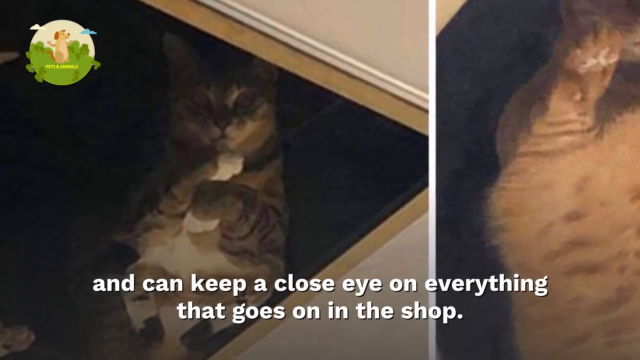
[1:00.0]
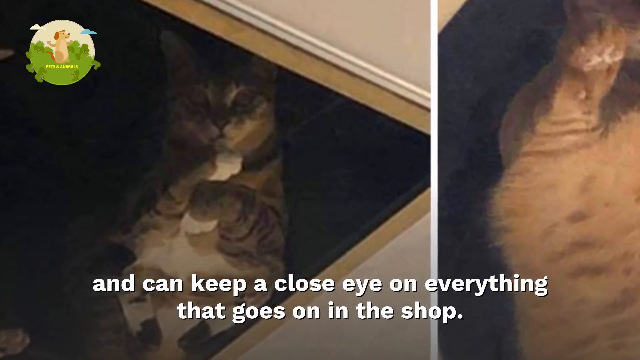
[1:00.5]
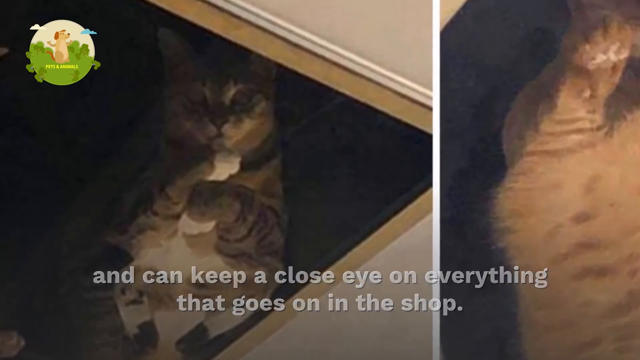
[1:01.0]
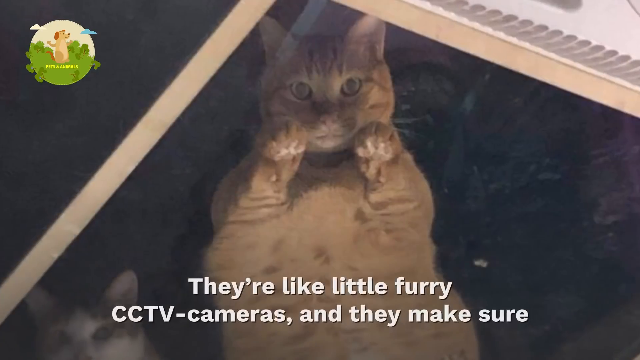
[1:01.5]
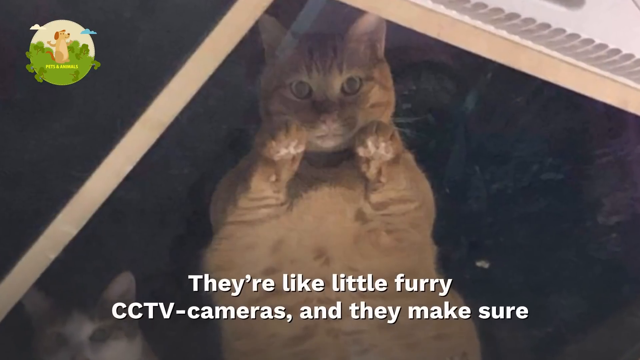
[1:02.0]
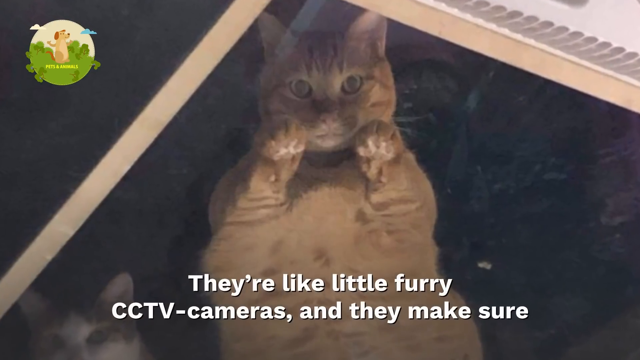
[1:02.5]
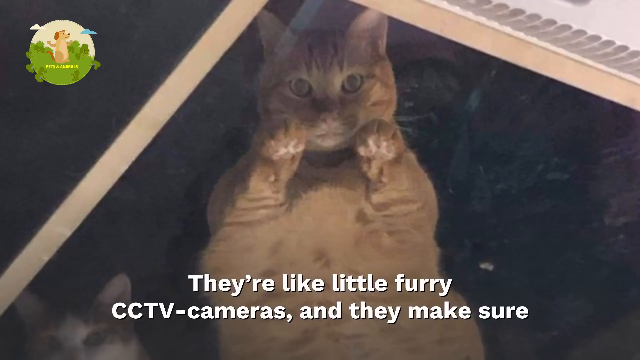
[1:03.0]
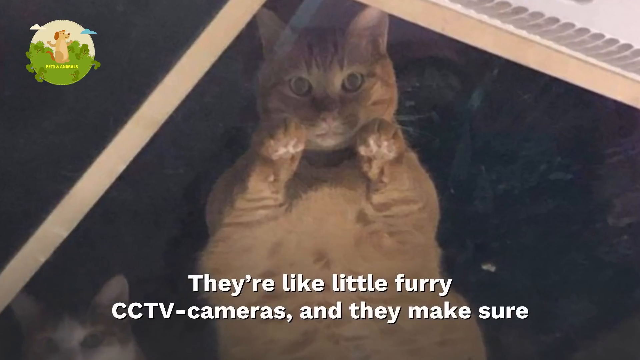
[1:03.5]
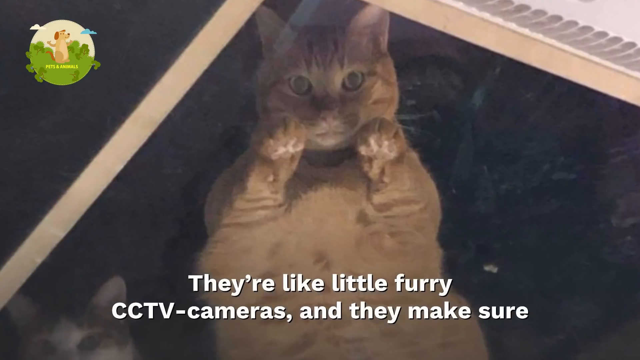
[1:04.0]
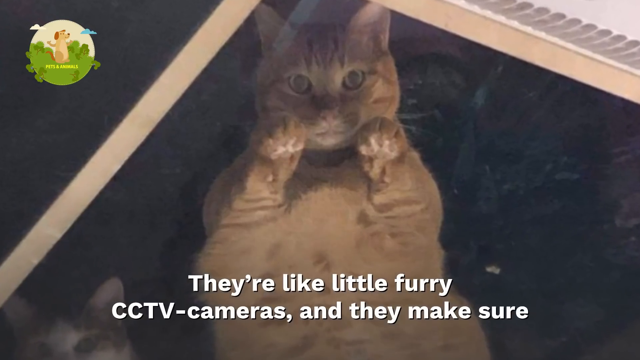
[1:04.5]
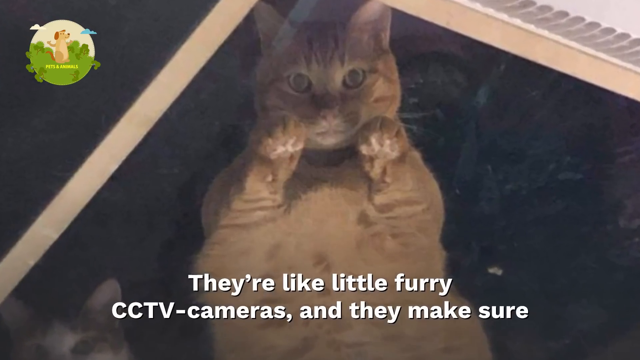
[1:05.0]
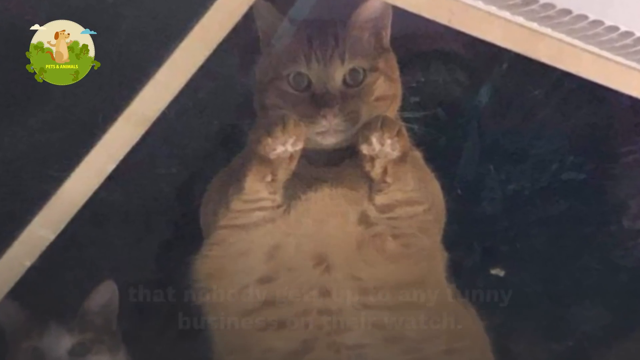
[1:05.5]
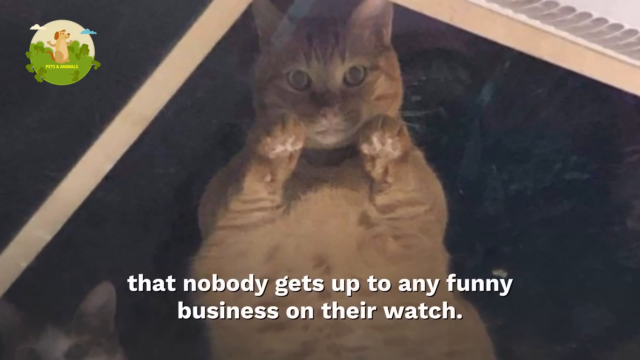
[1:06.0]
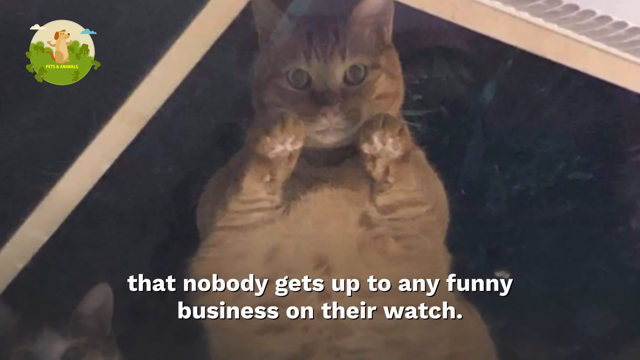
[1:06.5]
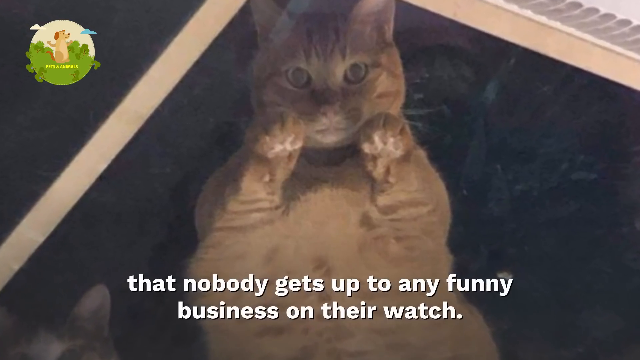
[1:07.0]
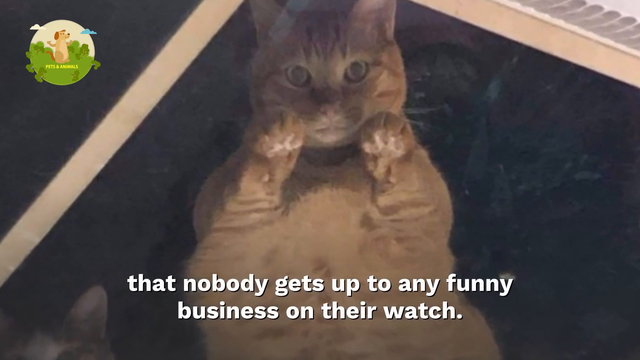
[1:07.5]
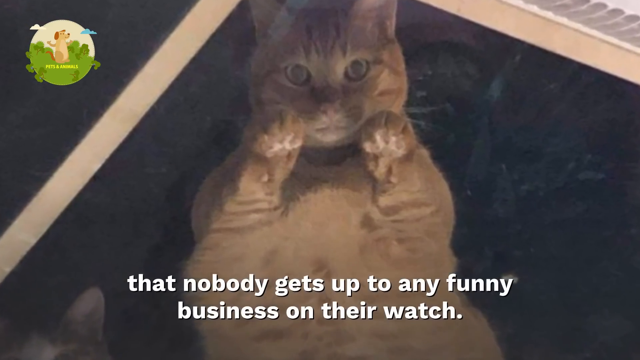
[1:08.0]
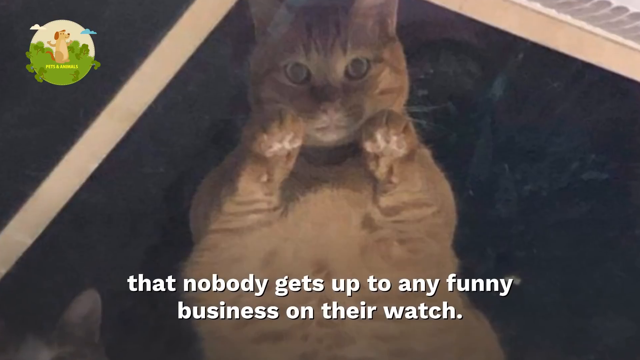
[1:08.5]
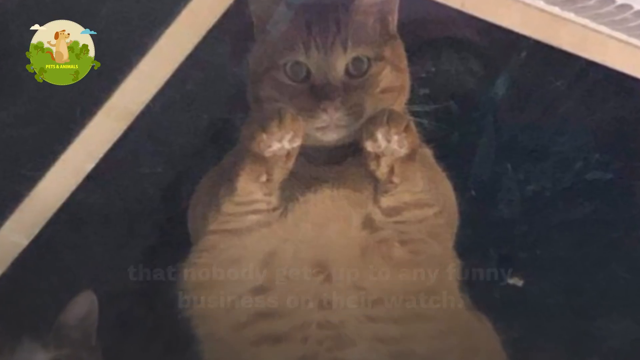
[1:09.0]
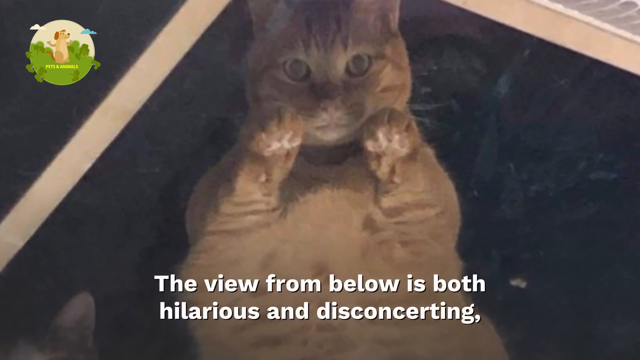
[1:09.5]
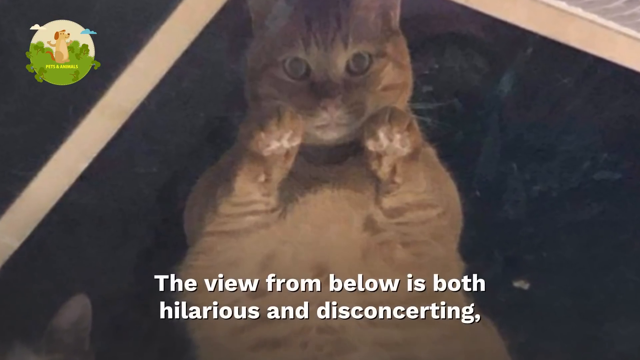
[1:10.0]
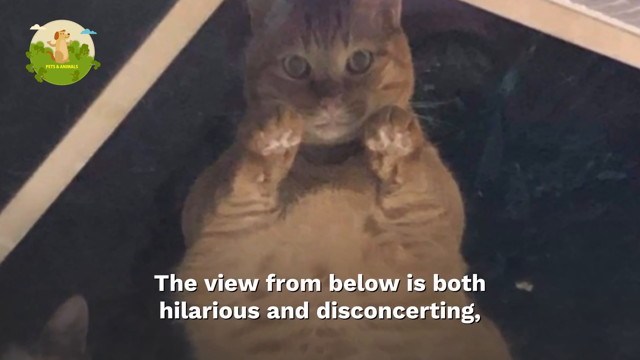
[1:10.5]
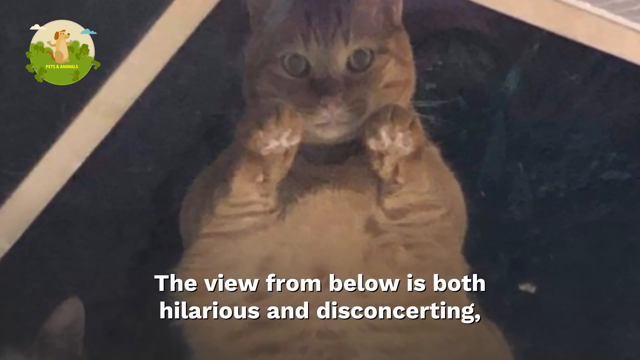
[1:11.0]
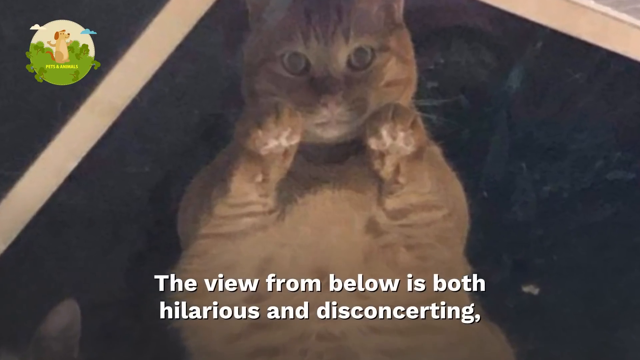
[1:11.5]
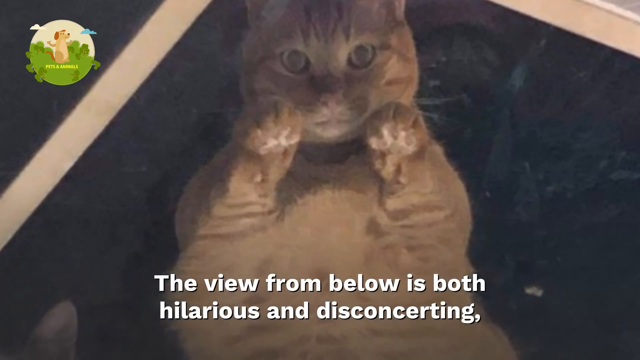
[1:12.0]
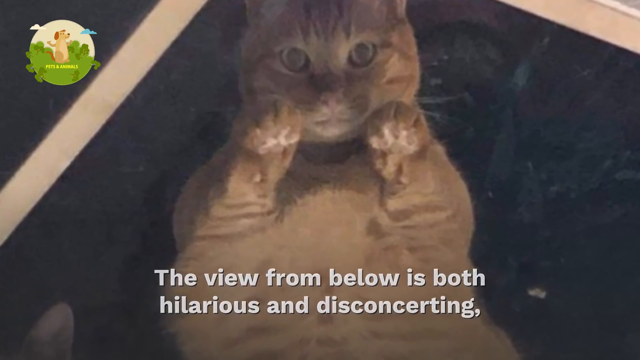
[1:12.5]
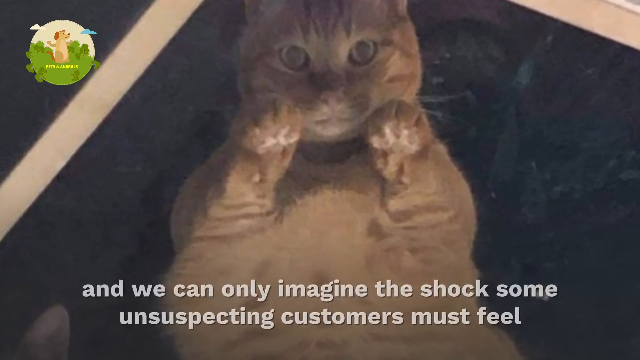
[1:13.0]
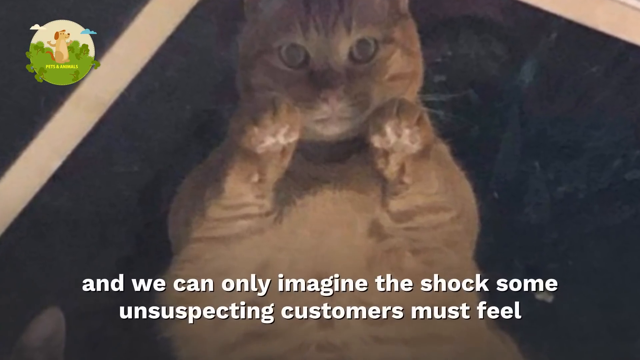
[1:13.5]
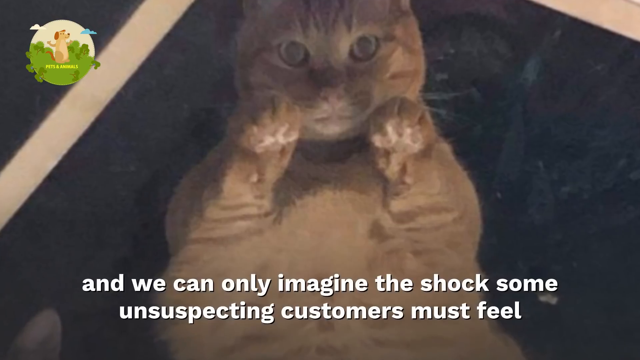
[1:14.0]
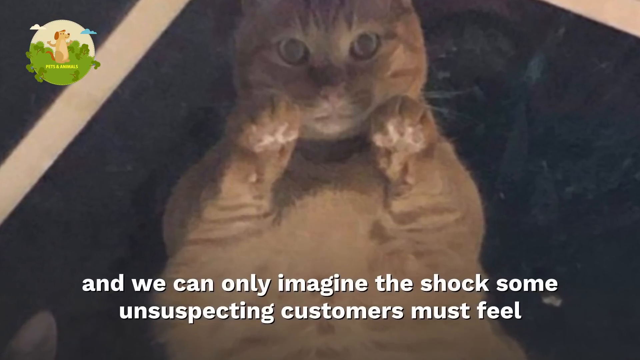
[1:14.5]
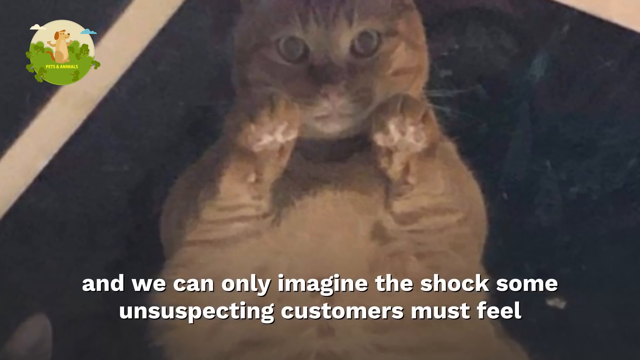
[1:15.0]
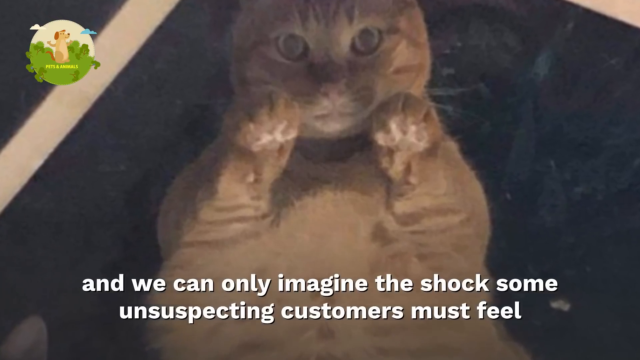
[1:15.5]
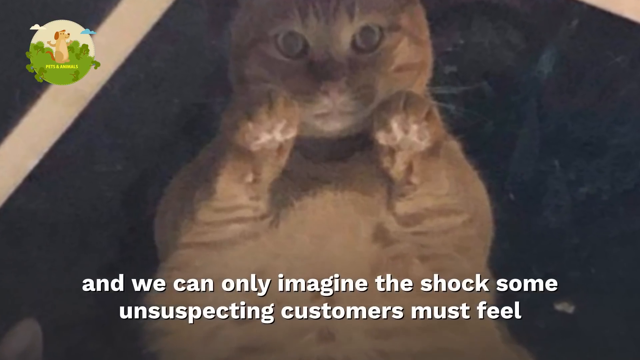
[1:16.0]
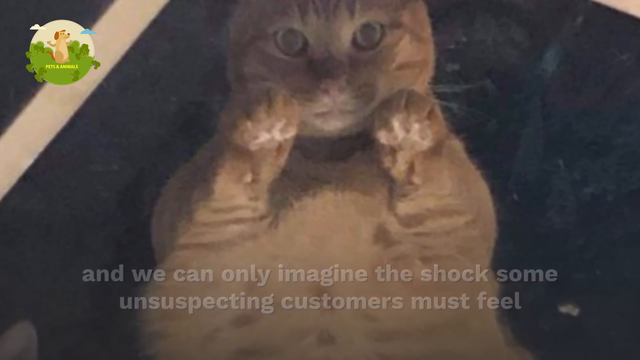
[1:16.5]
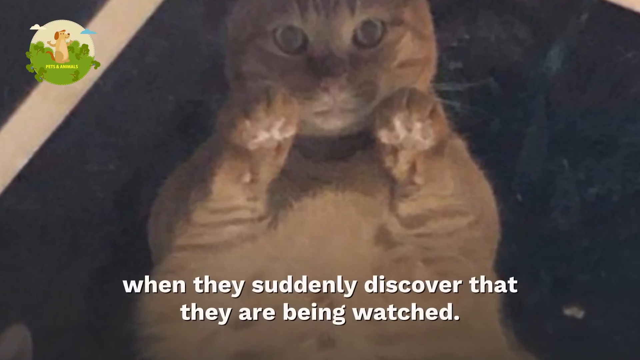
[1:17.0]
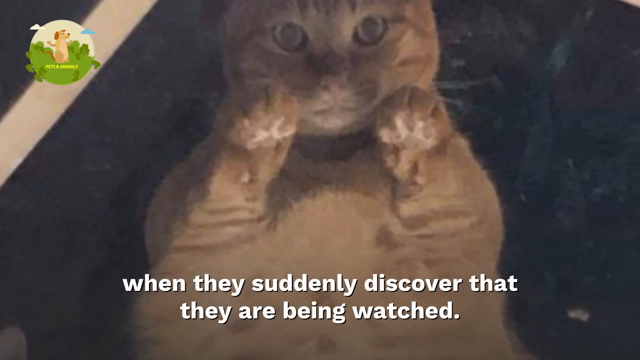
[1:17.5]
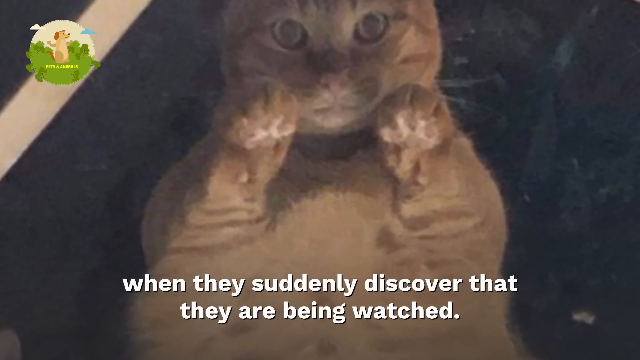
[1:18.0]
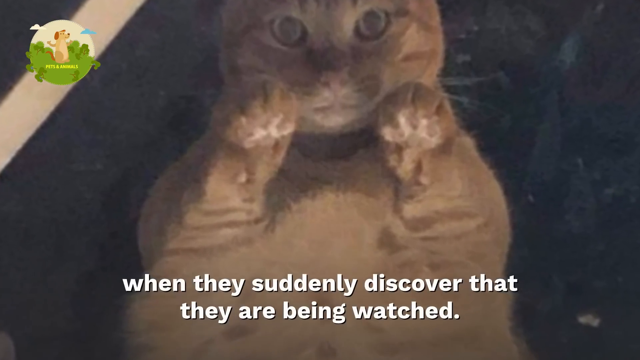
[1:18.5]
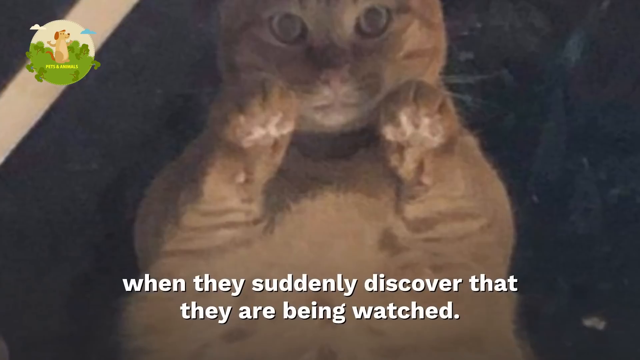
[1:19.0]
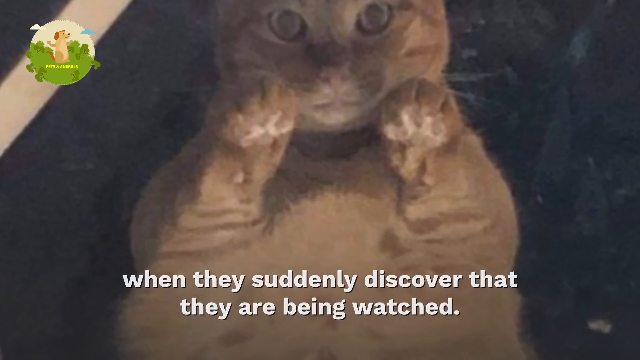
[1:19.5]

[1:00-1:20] Kittens and cats are up in ceiling tiles that a man has replaced with glass ones, so the cats can be seen looking down. The text says "they can keep a close eye on everything that goes on in the shop," then "they're like little furry CCTV cameras and they make sure that nobody gets up to any funny business on their watch. The view from below is both hilarious and disconcerting and we can only imagine the shock some unsuspecting customers might feel when they suddenly discover that they are being watched," and then "after all, it is not every day a floating cat gives you the side eye while you shop." Next a messy area in the shop appears, with papers spilled out on the ground. The steps are beige and look like they have Kleenexes, old toilet paper and other mess on them. A cat tree is in the upper right corner, and one cat walks on the hard floor in the main area.